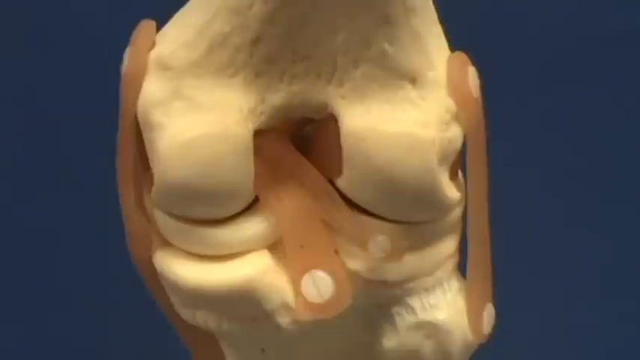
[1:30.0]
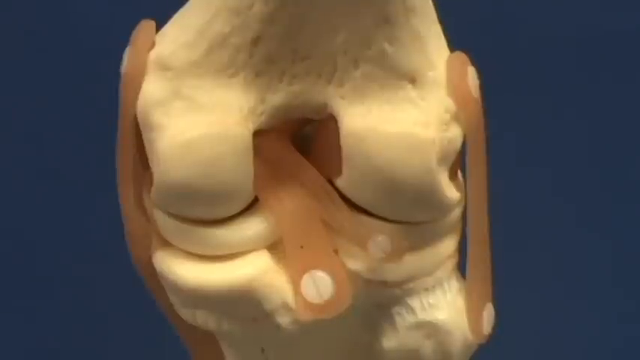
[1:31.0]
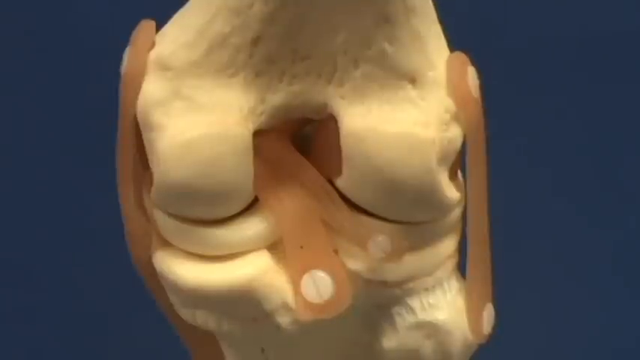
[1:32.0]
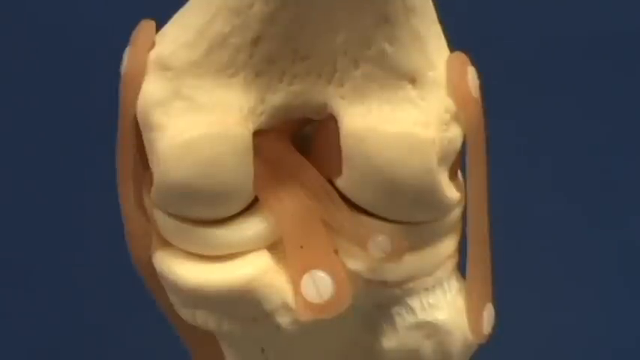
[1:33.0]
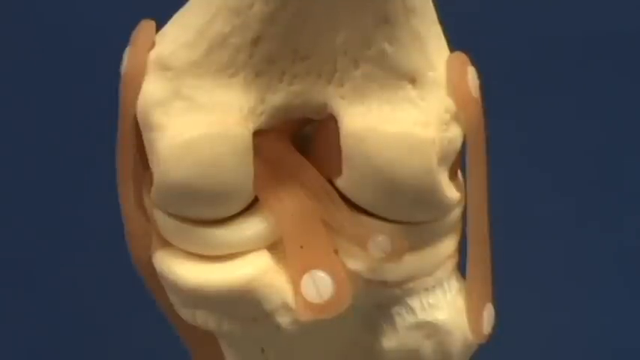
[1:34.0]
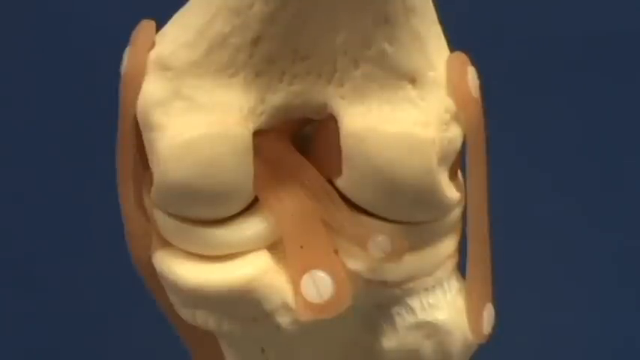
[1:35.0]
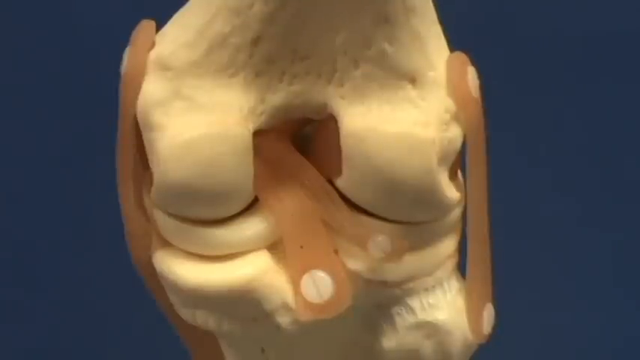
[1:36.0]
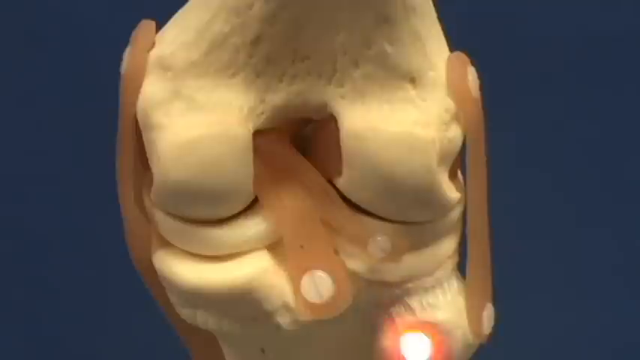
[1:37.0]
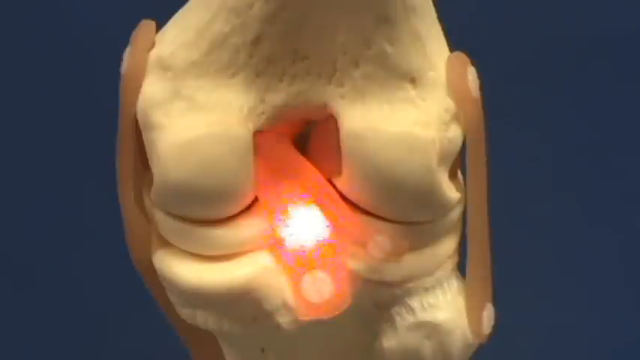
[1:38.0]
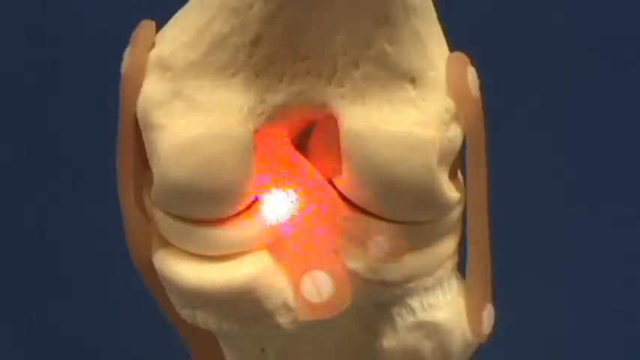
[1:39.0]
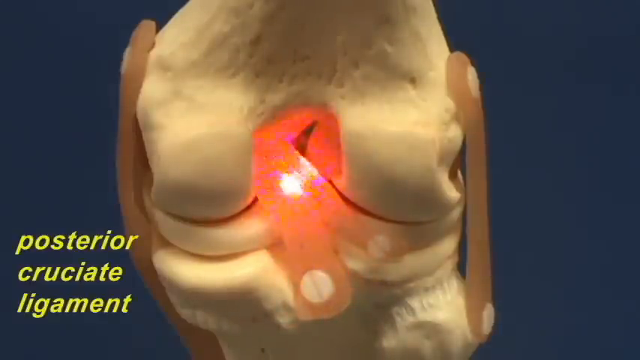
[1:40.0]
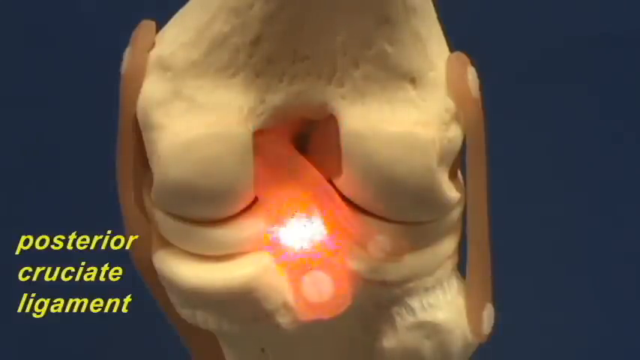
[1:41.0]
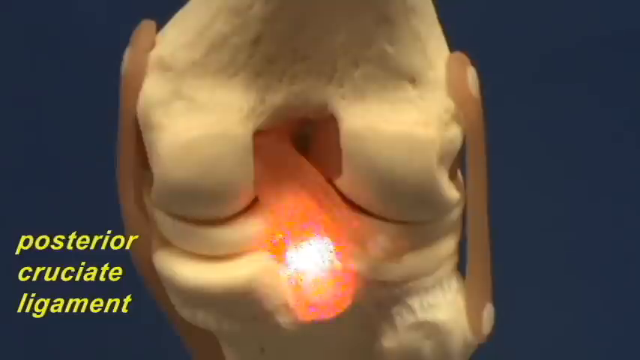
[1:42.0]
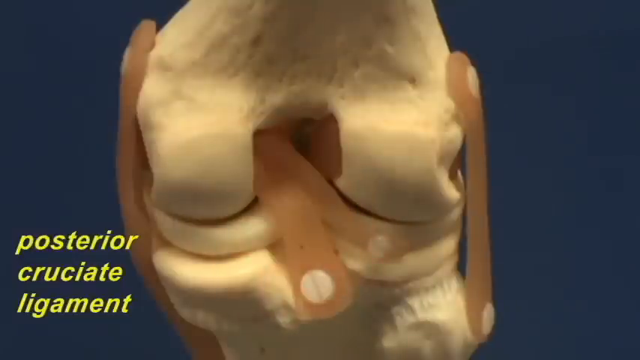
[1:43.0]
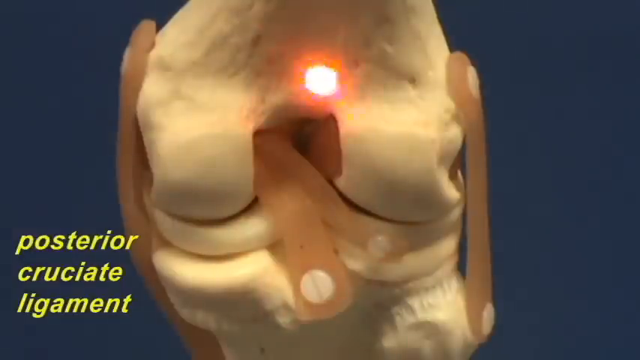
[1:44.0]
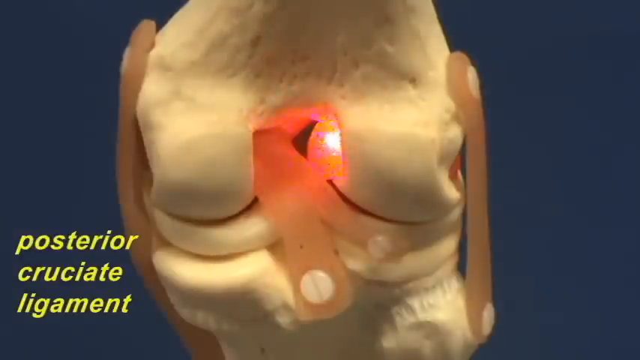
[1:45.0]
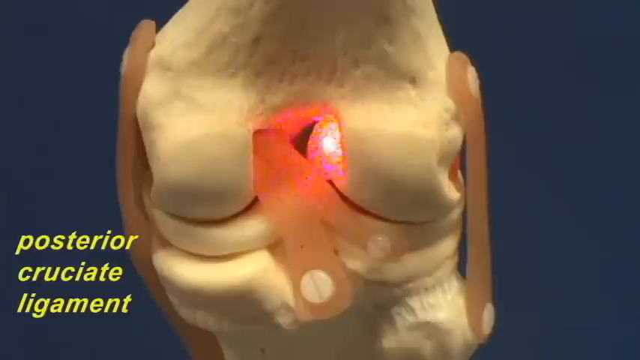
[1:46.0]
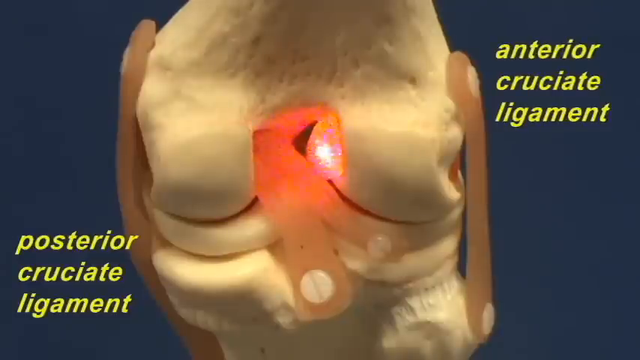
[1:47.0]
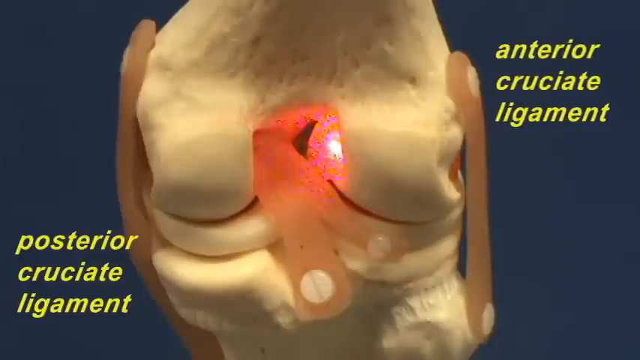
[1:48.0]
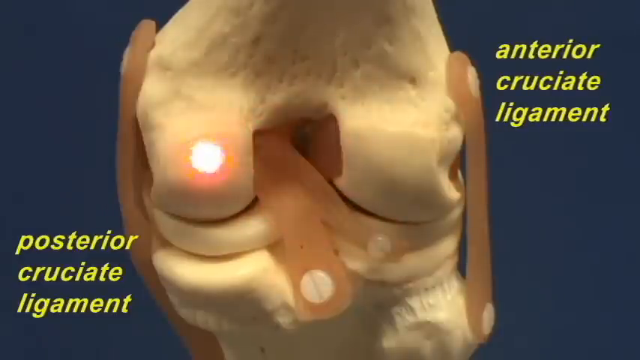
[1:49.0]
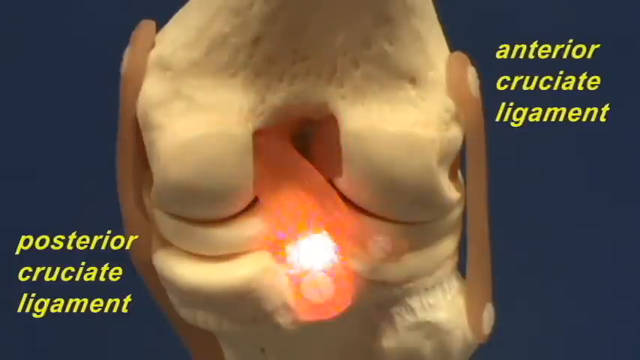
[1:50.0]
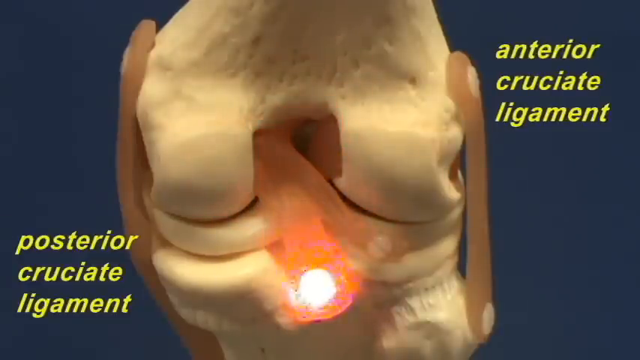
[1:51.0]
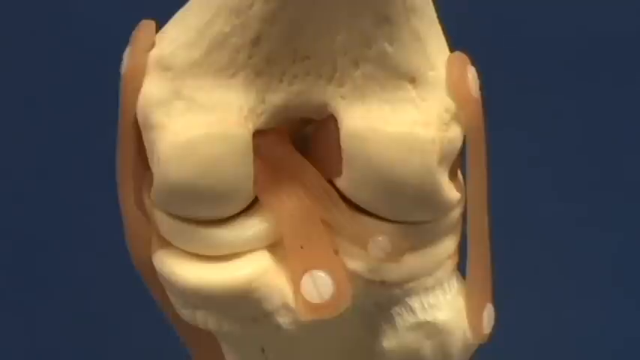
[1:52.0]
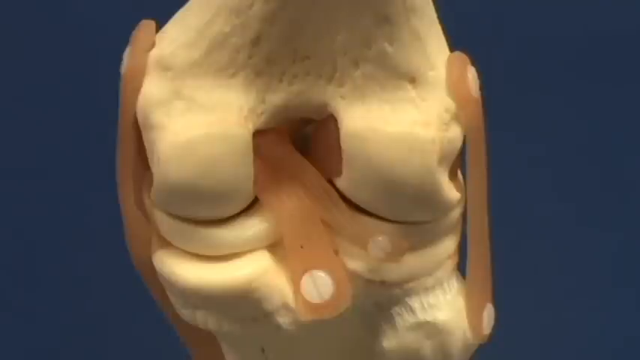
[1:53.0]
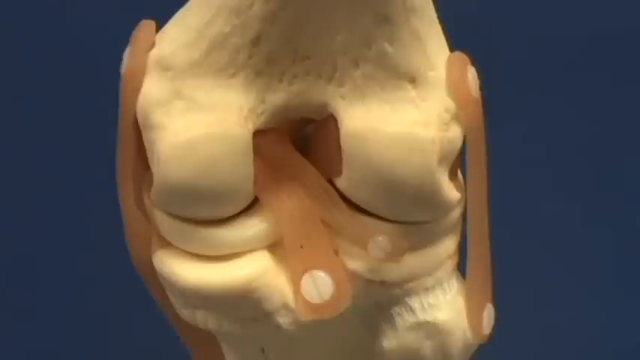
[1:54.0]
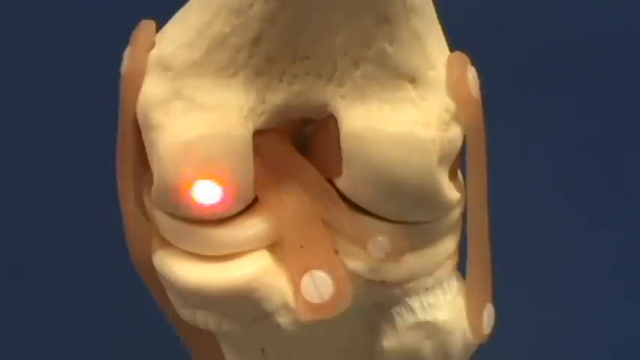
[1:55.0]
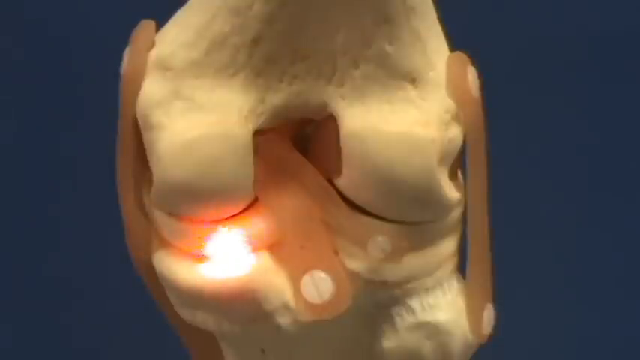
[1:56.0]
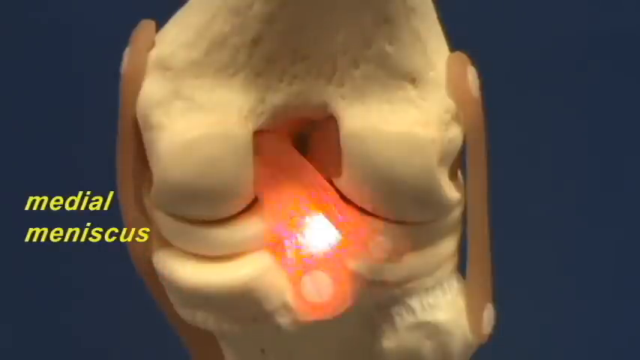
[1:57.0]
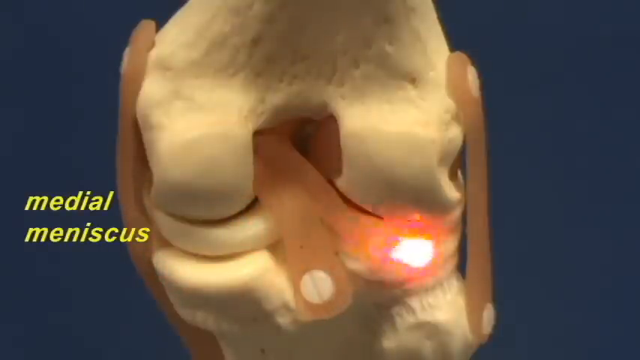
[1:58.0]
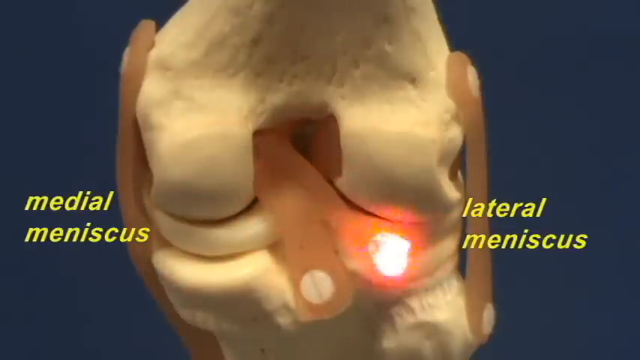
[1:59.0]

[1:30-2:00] Parts of the three-dimensional knee model that had been removed earlier in the video are now back in place: the posterior cruciate ligament, the medial meniscus, the anterior cruciate ligament, and the lateral meniscus. The doctor points at and traces each of these structures with his laser pointer.